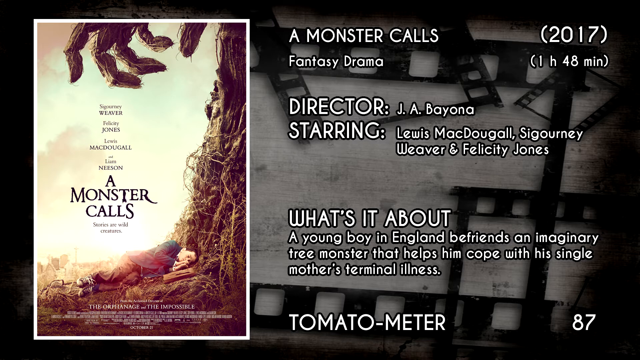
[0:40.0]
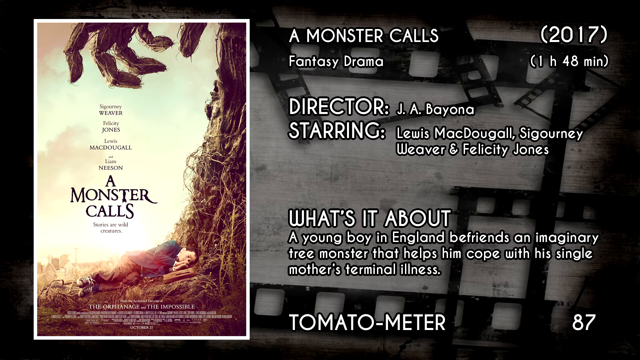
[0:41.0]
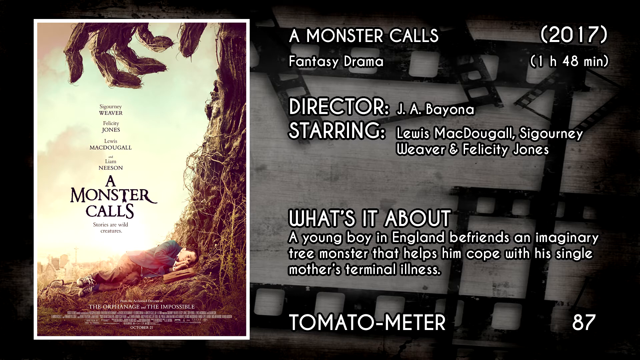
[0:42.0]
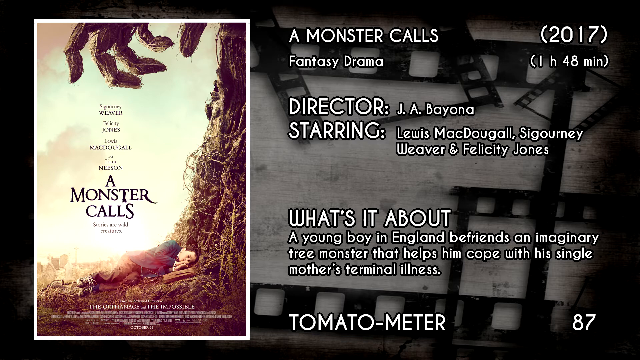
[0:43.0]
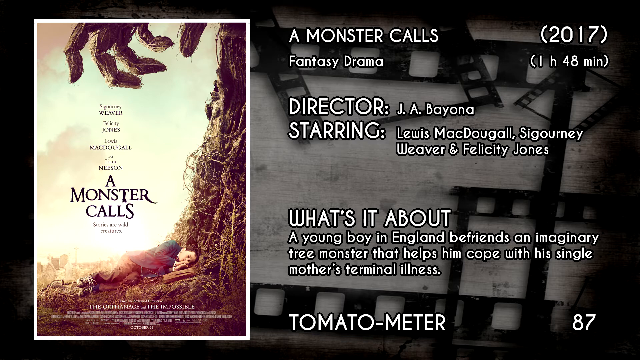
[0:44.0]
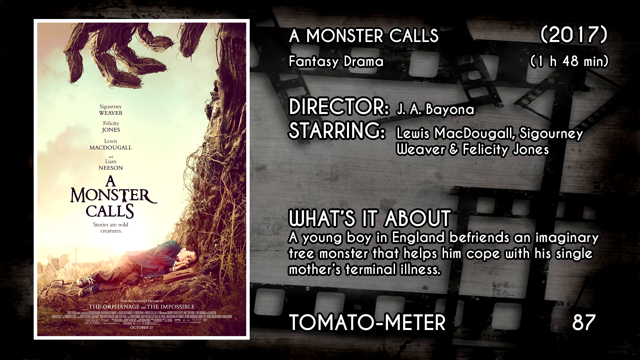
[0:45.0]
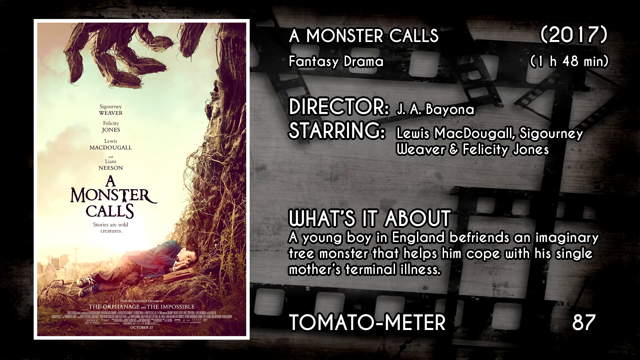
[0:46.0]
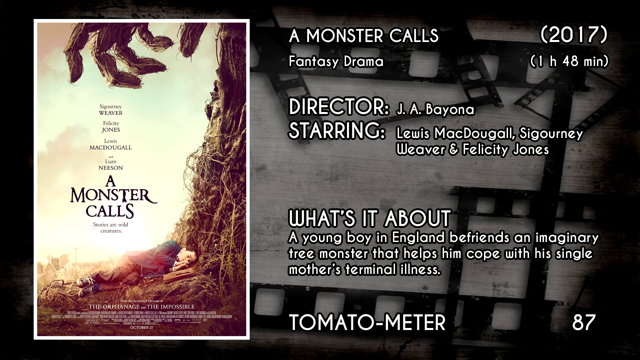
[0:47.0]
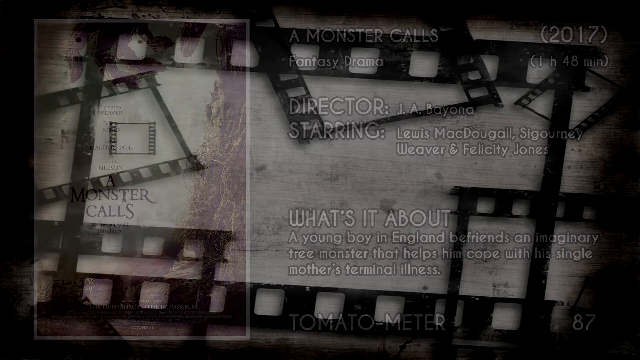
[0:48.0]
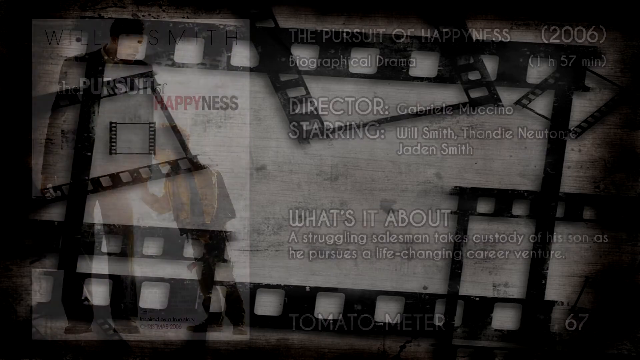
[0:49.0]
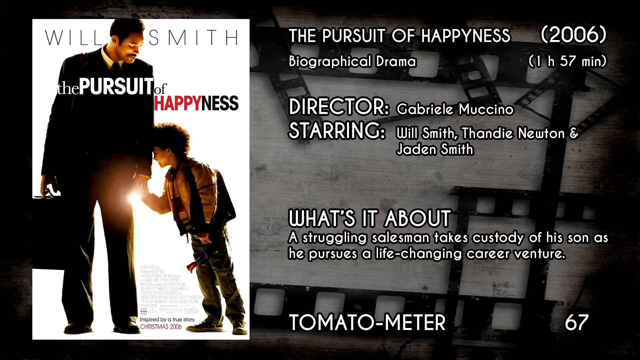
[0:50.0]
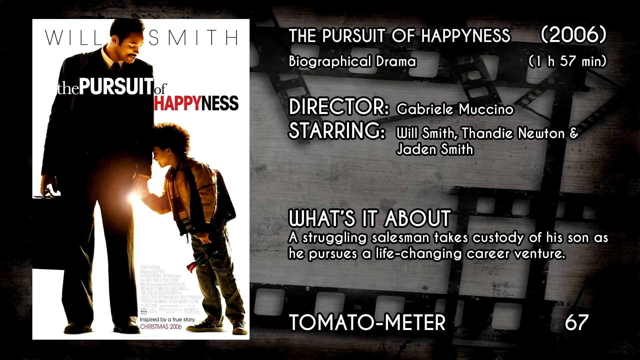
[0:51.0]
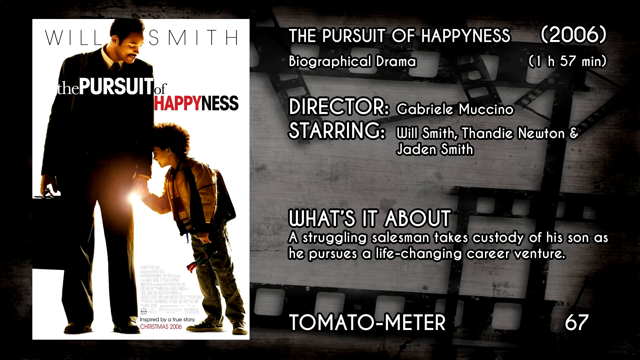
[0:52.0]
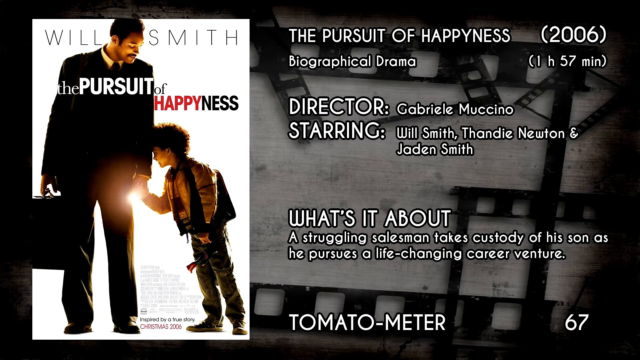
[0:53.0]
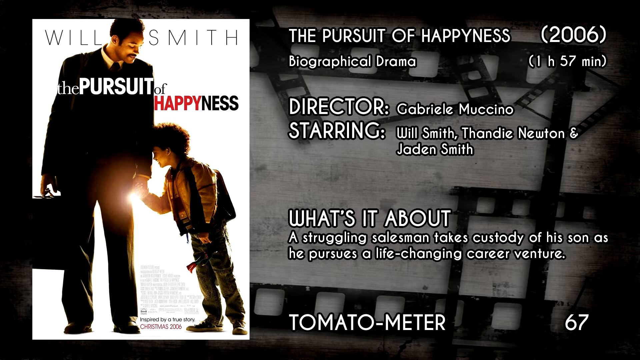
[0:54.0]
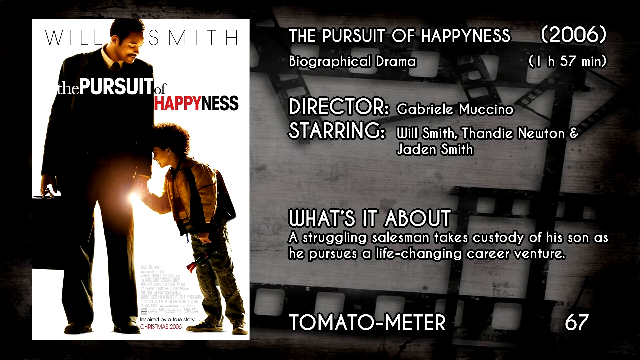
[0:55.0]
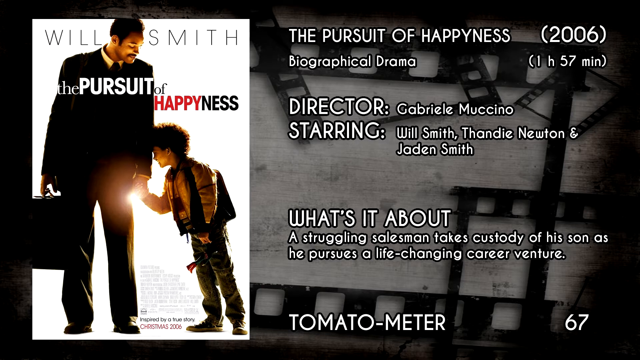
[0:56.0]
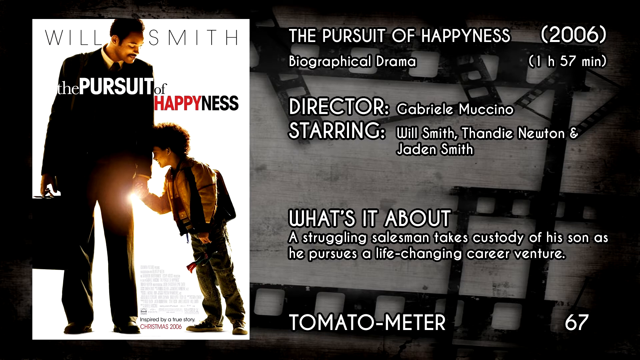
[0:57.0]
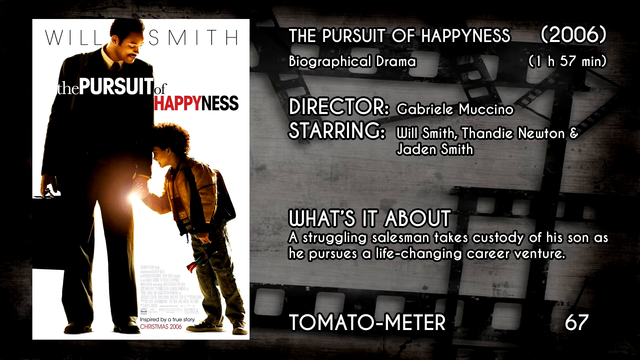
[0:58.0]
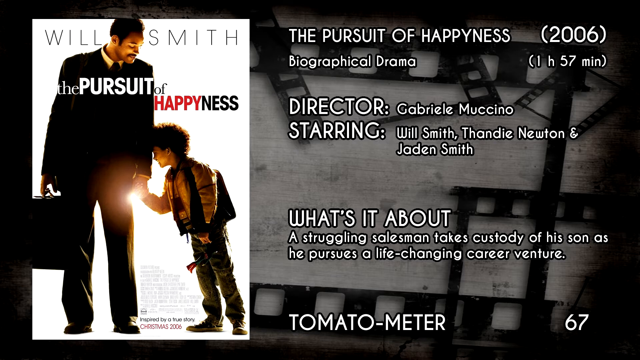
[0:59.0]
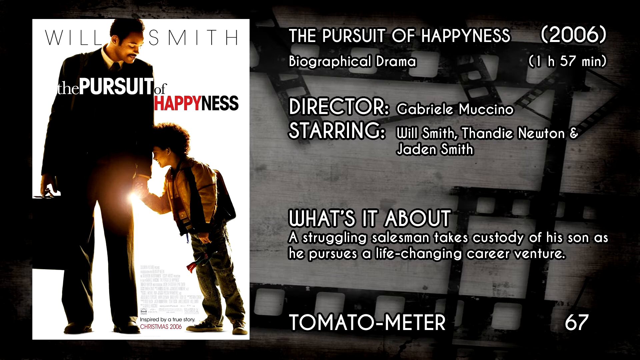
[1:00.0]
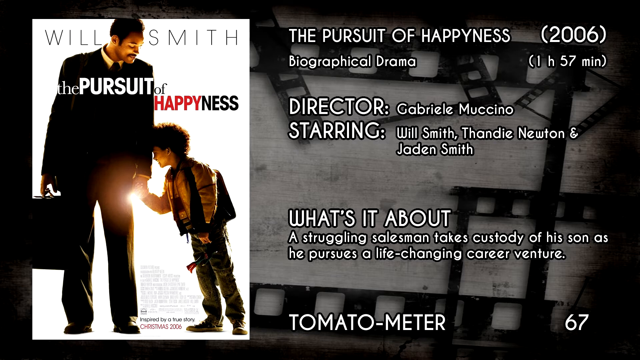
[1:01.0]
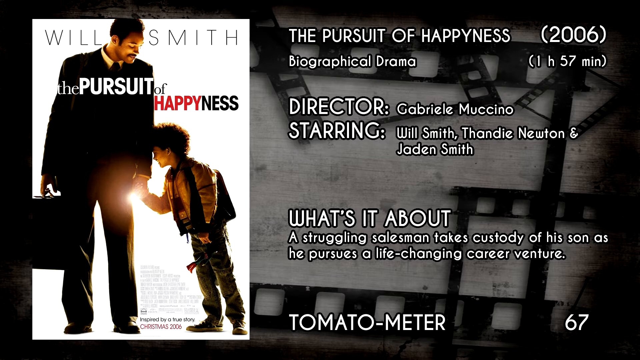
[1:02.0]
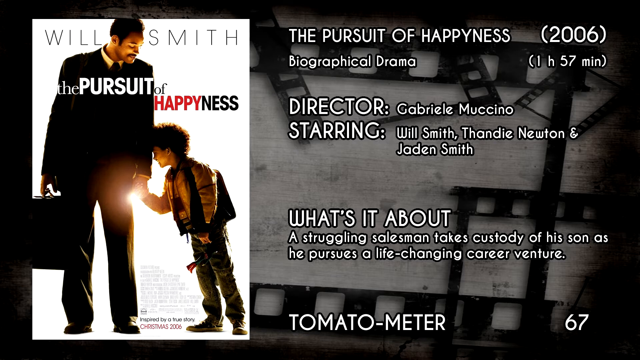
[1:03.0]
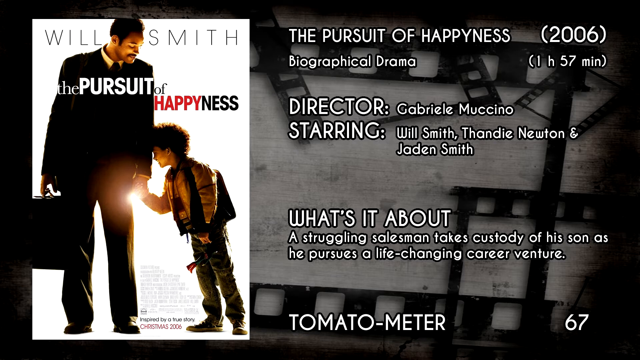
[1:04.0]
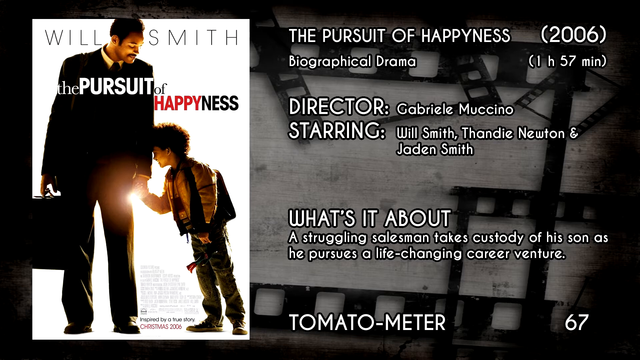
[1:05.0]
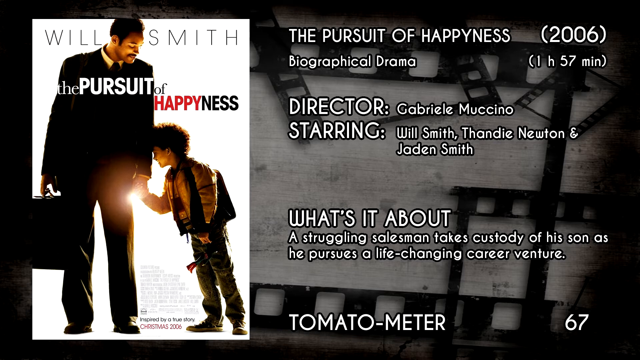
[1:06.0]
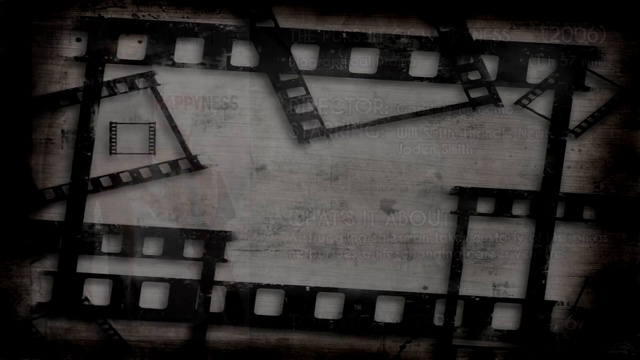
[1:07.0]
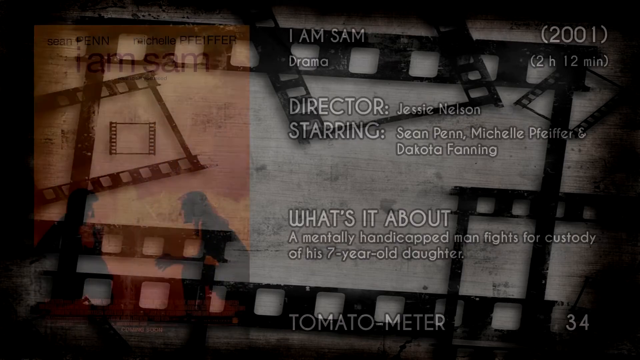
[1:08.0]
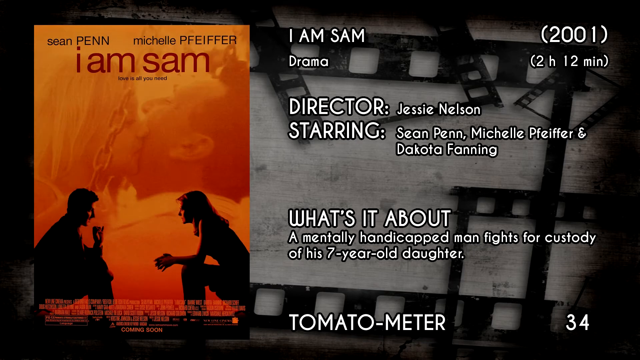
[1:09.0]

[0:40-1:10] The movie shown is The Pursuit of Happiness, a biographical drama released in 2006 and 1 hour 57 minutes long. The director is listed as Gabriel Mushinu, and the cast includes Will Smith, Tandy Newton and Jaden Smith. The description says it is about a struggling salesman who takes custody of his son as he pursues a life-changing career. The cover appears to show the salesman, who looks like Will Smith, with a small boy leaning on his hand, apparently the son. Tomatometer also appears. The background of the picture is white, and the background of the movie description is grey.